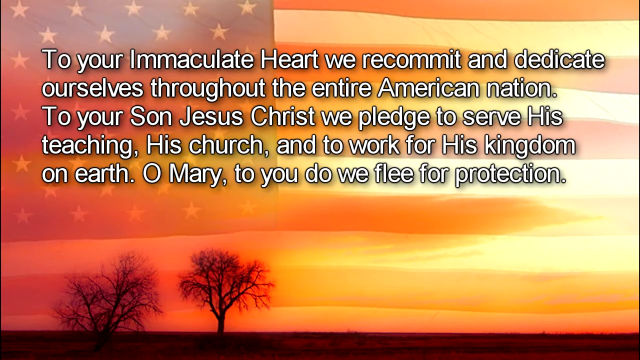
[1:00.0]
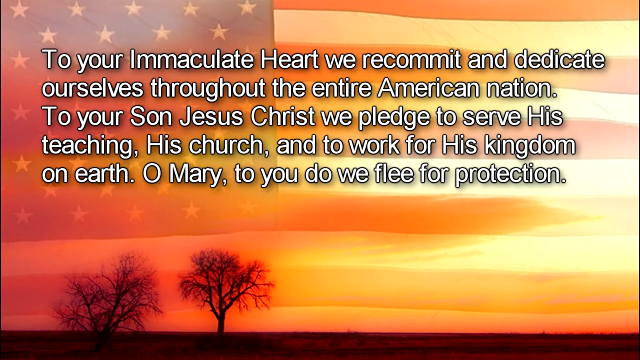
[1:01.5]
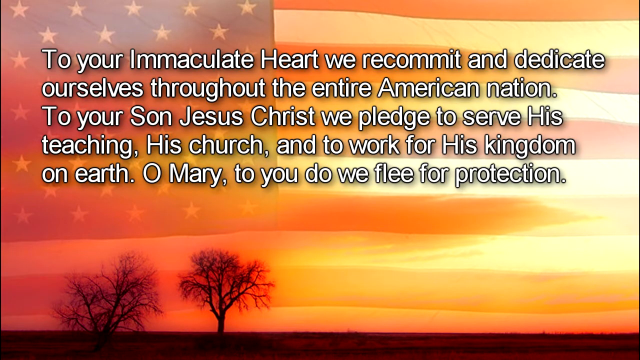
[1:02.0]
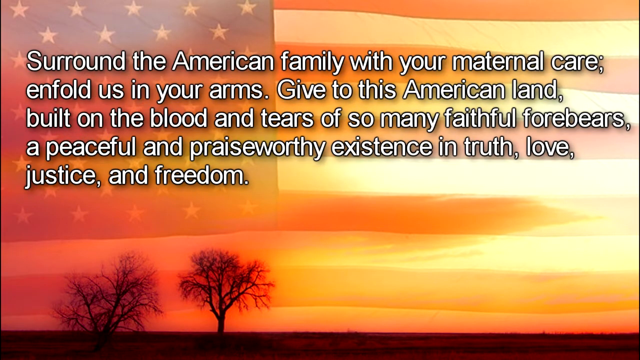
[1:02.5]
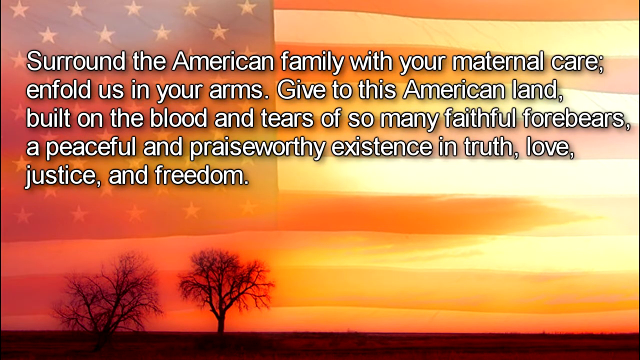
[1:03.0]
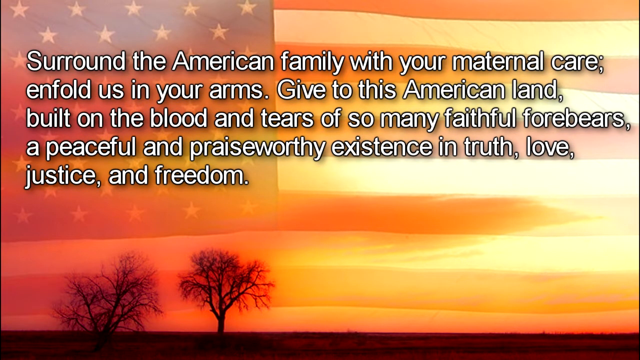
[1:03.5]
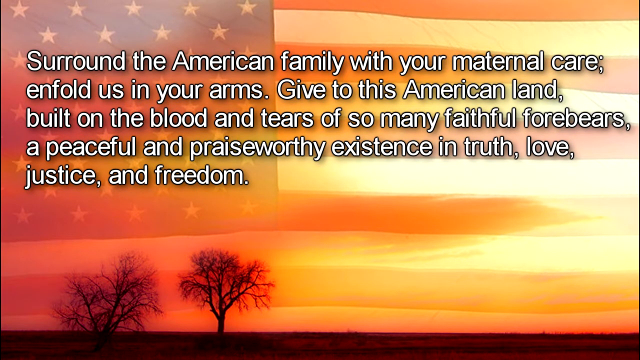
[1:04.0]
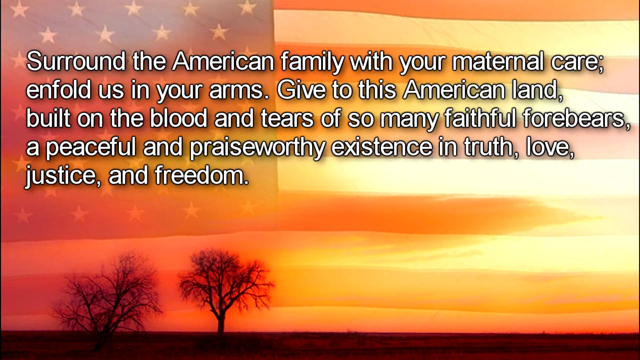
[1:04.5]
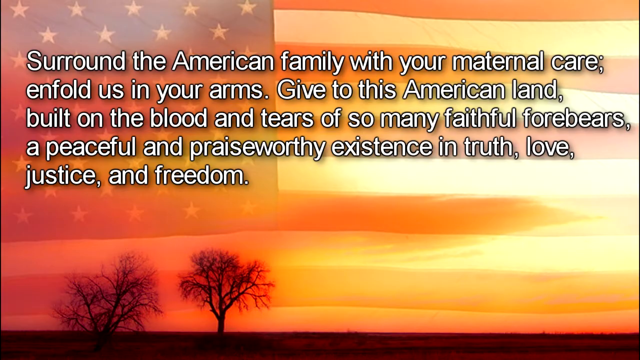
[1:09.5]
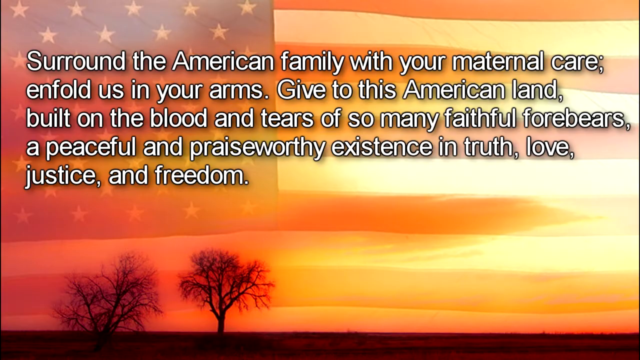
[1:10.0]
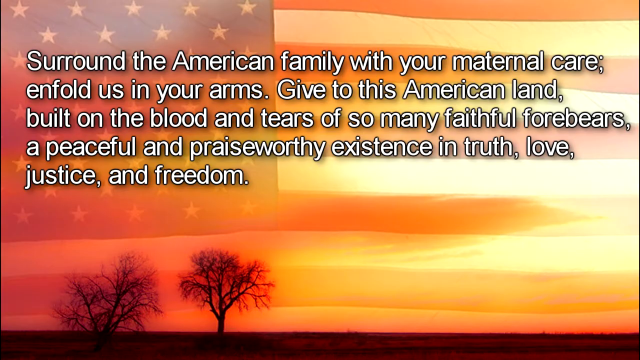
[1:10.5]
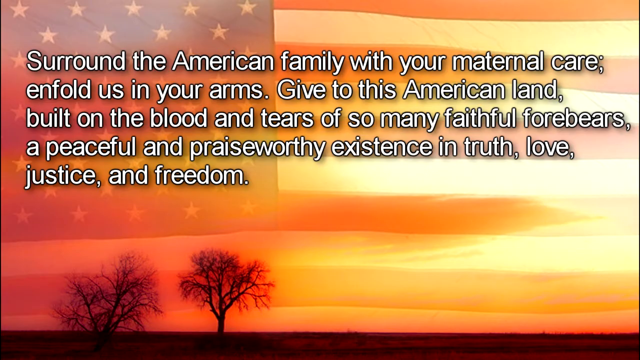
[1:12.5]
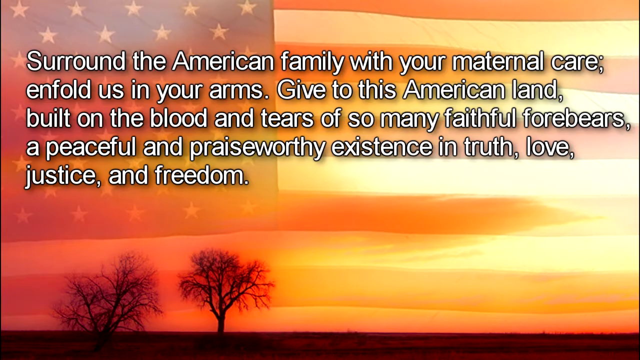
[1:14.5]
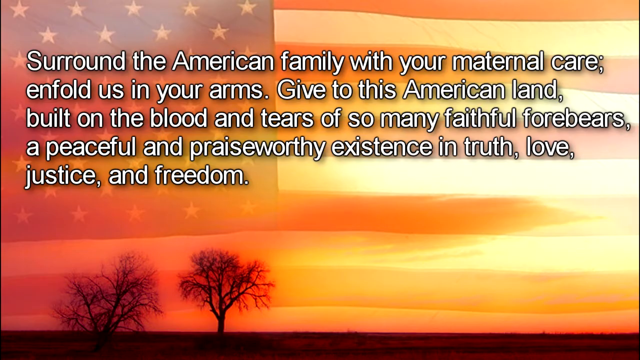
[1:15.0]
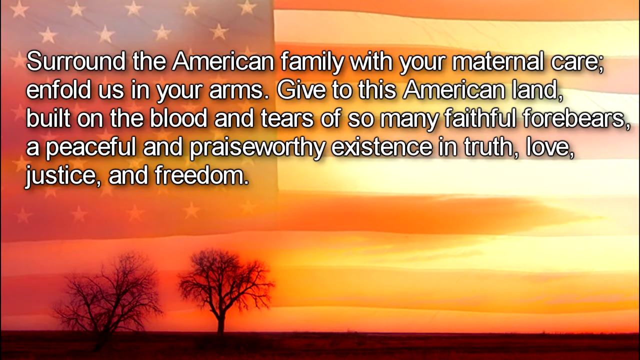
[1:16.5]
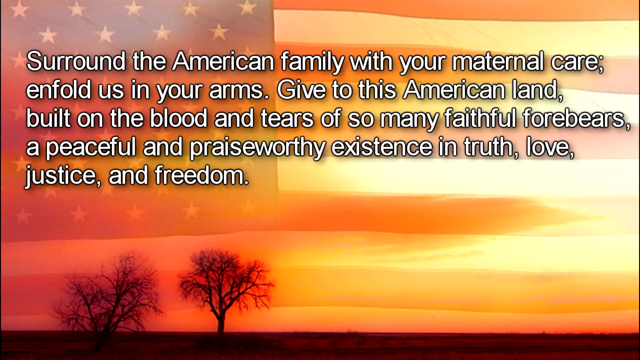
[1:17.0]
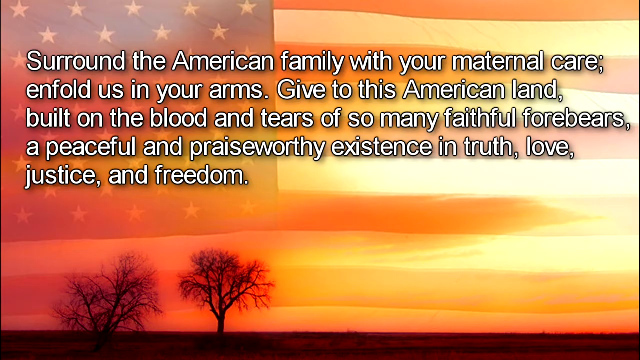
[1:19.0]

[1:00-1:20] An American flag fills the whole background, with the stars in the upper left-hand corner. In the lower left-hand corner are two trees in what looks kind of like a farmer's open field; they look like winter trees and have a reddish tone, though it is still evidently winter for them. The text reads "to your immaculate heart, we recommit and dedicate ourselves throughout the entire American nation. To your son, Jesus Christ, we pledge to serve his teaching, his church, and to work for his kingdom on earth. Oh Mary, to you do we flee for protection." The next page shows more words in white font outlined in black: "surround the American family with your maternal care and enfold us in your arms. Give to this American land built on the blood and tears of so many faithful forebears. A peaceful and praiseworthy existence in truth, love, justice, and freedom."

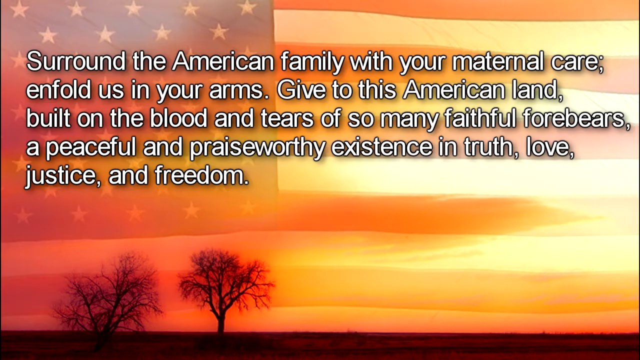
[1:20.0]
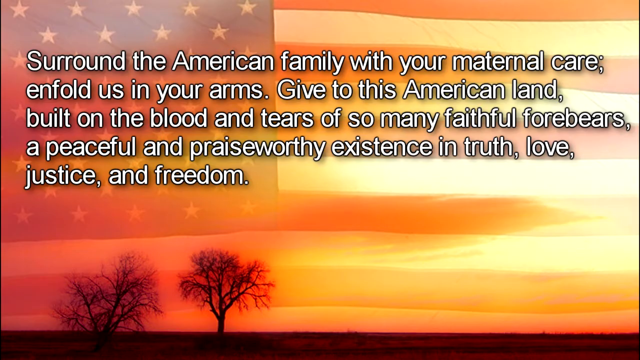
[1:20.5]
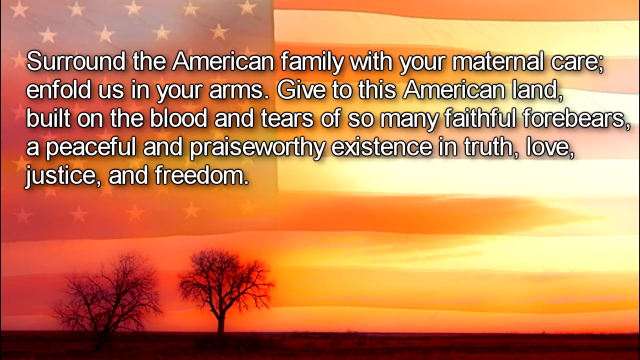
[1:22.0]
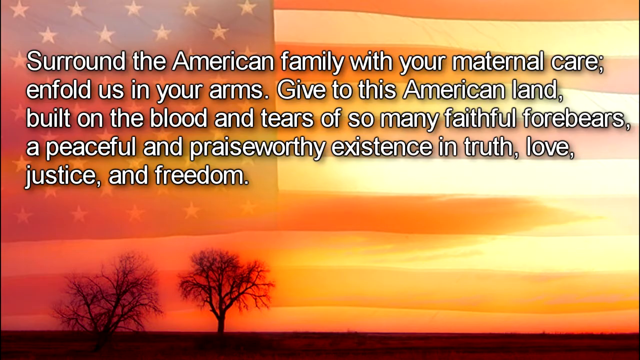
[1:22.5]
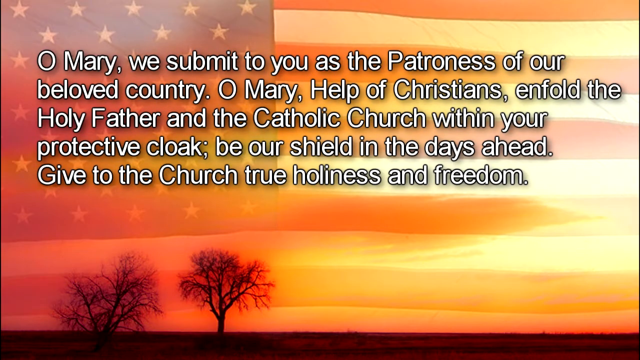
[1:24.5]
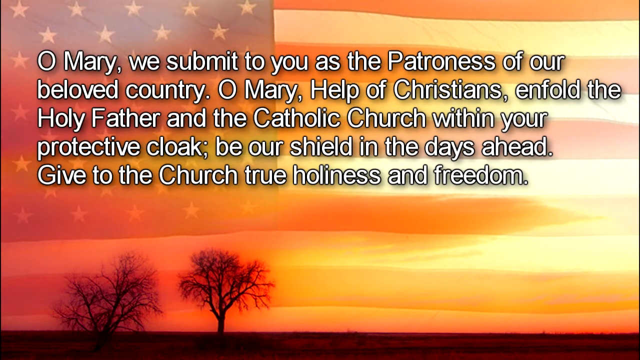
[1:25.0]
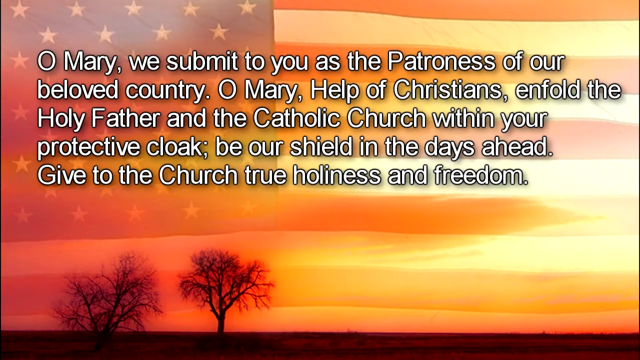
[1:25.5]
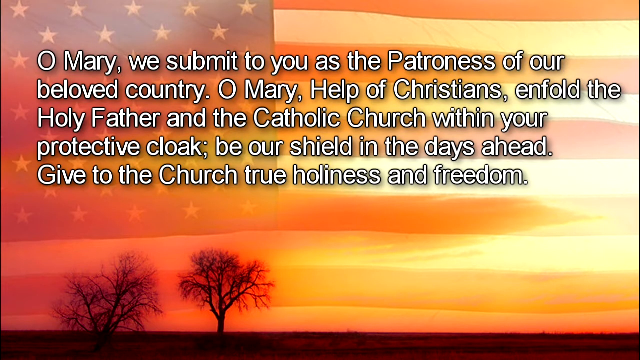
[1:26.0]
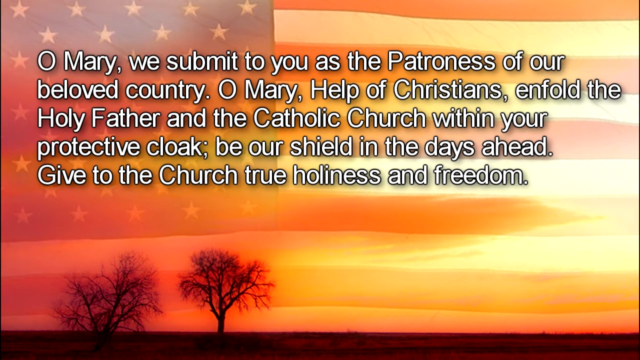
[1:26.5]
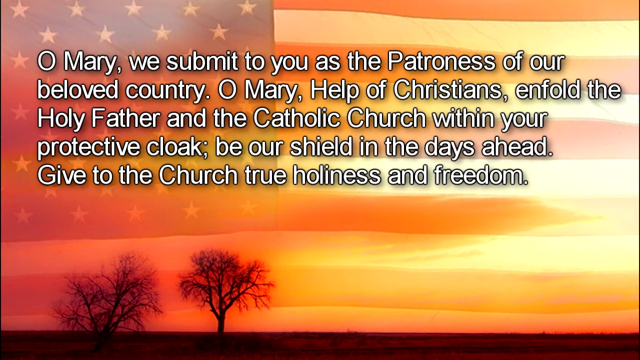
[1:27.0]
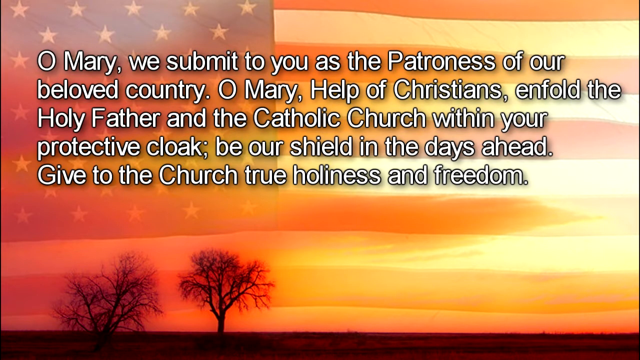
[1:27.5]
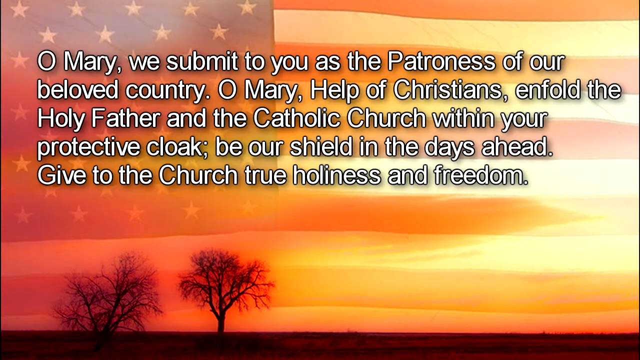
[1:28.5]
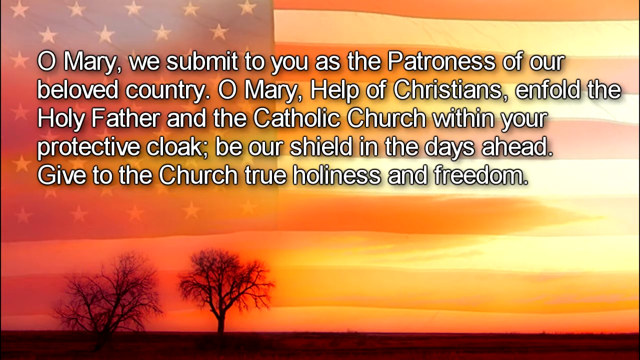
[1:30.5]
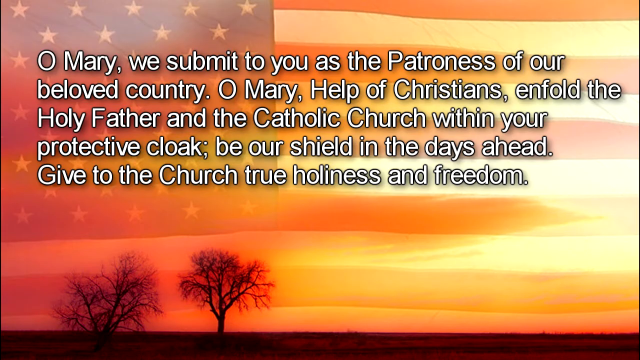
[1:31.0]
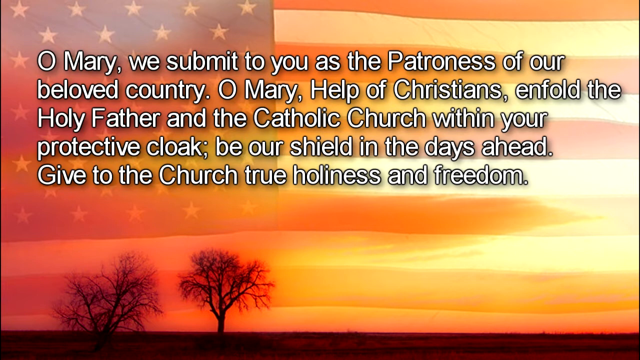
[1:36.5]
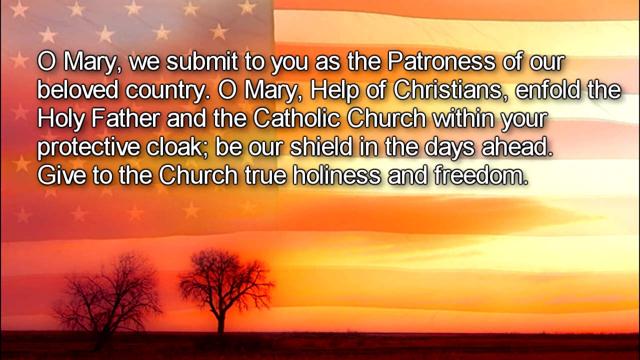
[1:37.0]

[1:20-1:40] The background is a picture of an American flag, with the stars on a blue background in the upper left-hand corner and the white and red stripes running down the right side. Two winter trees are in the bottom section on the left. White words outlined in black on top read "Surround the American family with your maternal care, enfold us in your arms. Give to this American land built on the blood and tears of so many faithful forebears a peaceful and praiseworthy existence in truth, love, justice, and freedom." The next part of the prayer then pops up: "O Mary, we submit to you as the patroness of our beloved country. O Mary, help of Christians, enfold the Holy Father and the Catholic Church within your protective cloak. Be our shield in the days ahead. Give to the Church true holiness and freedom."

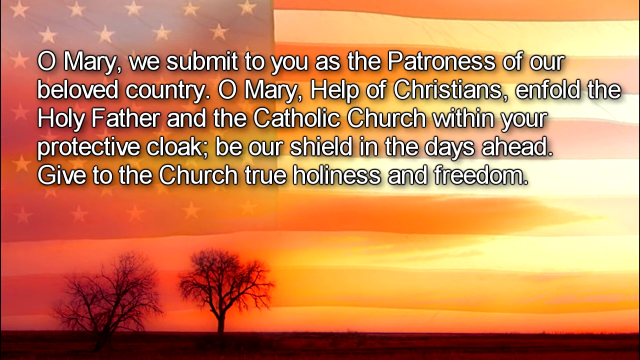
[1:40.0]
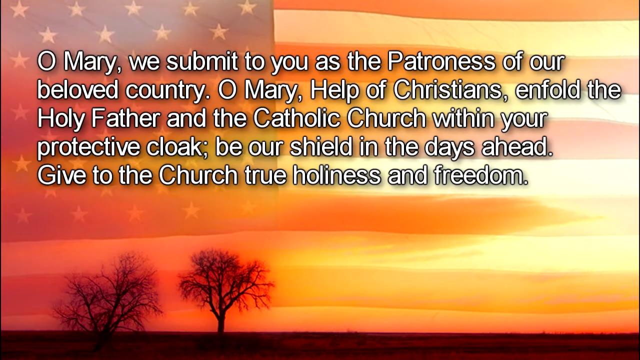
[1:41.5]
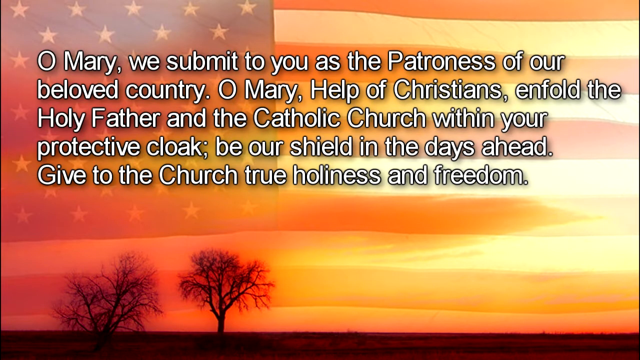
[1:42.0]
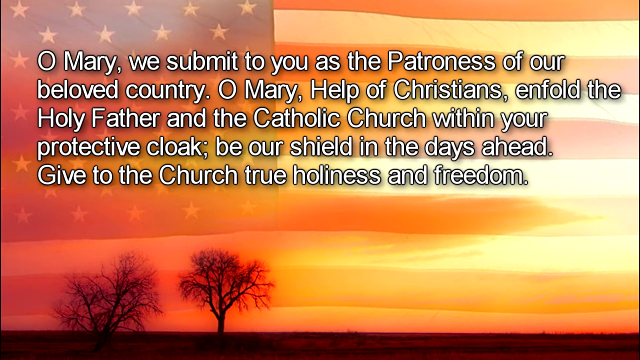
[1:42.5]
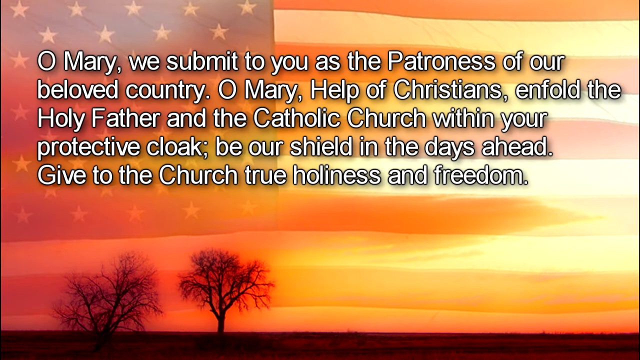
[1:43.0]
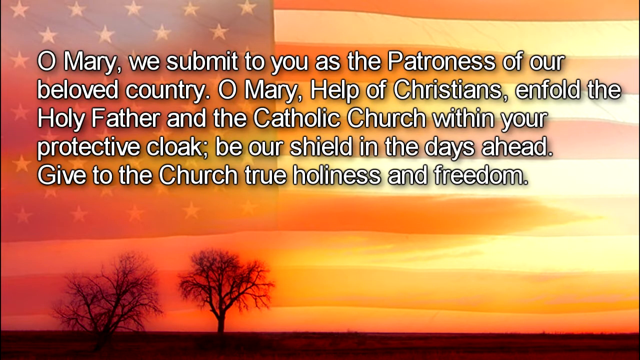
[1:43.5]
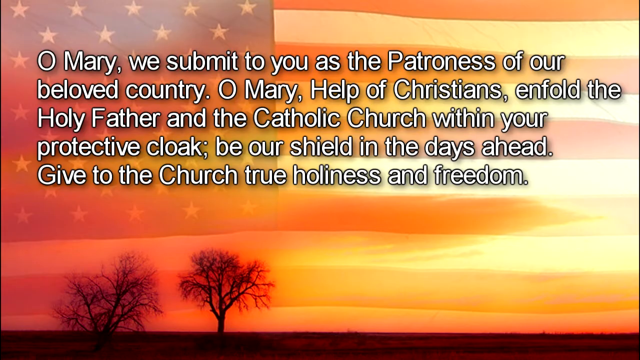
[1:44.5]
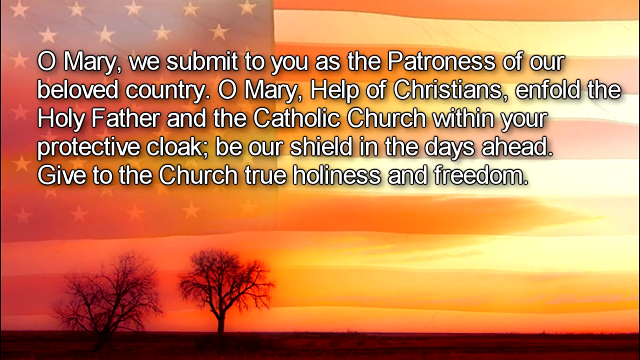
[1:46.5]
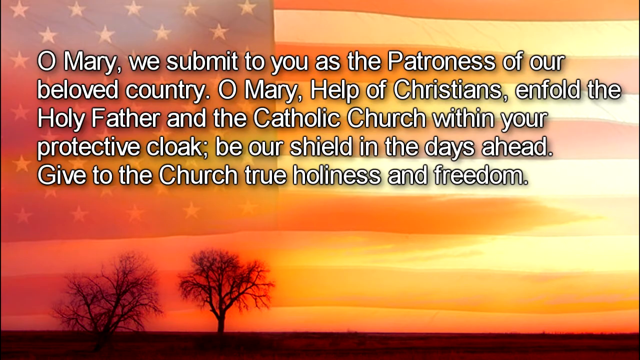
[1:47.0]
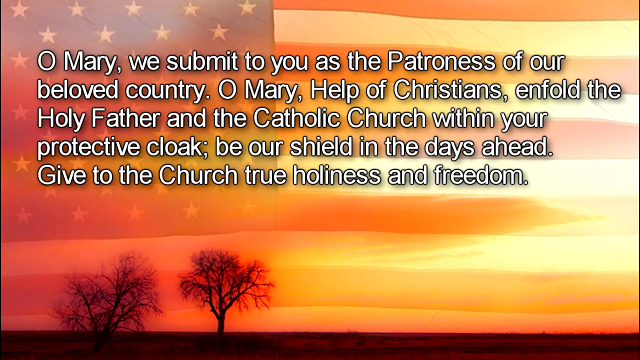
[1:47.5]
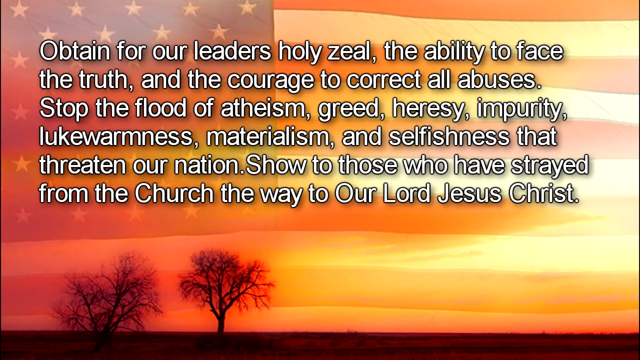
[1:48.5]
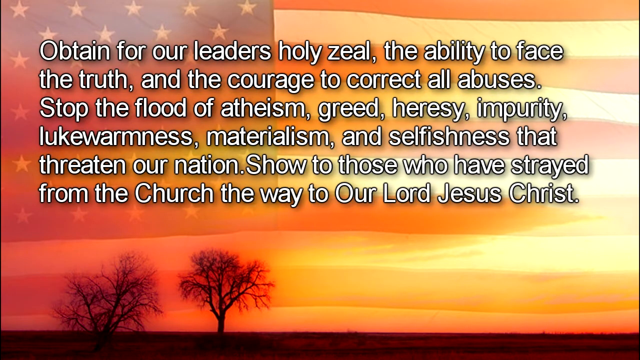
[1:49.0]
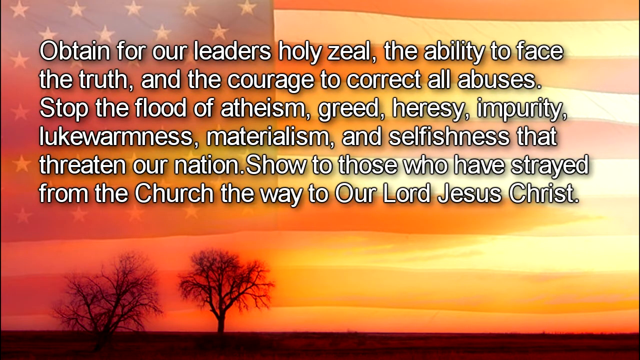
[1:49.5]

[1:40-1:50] A page shows words written on top of an American flag, with the stars on navy in the upper left-hand corner and the stripes on the right, going all the way down. Two winter trees are in the lowest left portion, and they have kind of a reddish glow. The text reads "Oh Mary, we submit to you as the patroness of our beloved country. Oh Mary, help of Christians, enfold the Holy Father and the Catholic church within your protective cloak, be our shield in the days ahead, give to the church true holiness and freedom."